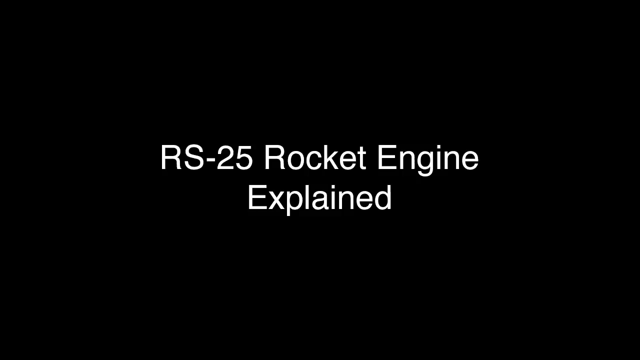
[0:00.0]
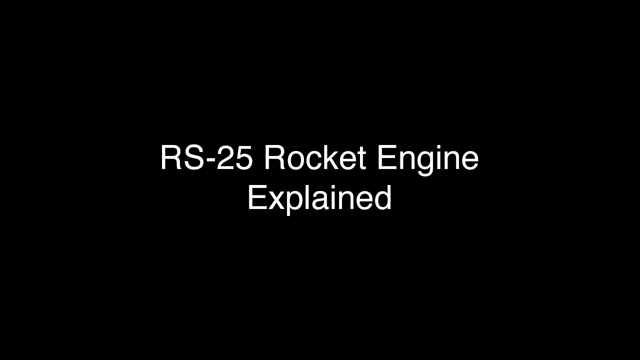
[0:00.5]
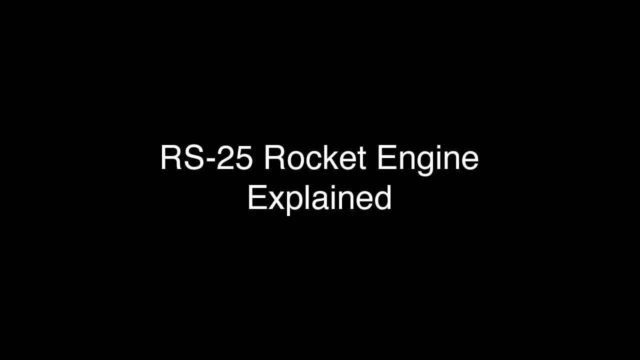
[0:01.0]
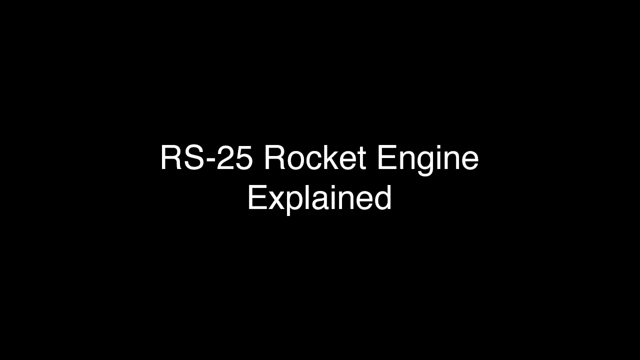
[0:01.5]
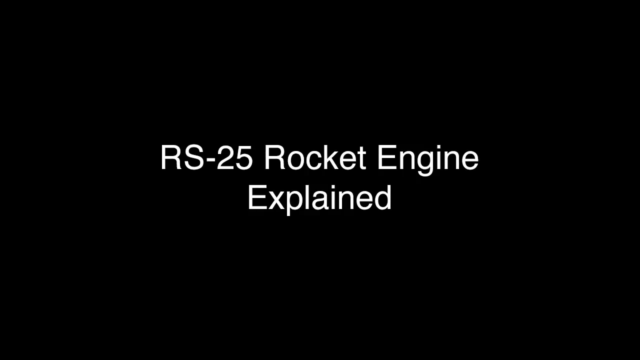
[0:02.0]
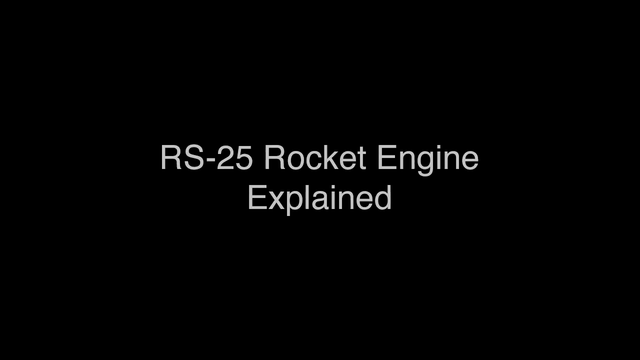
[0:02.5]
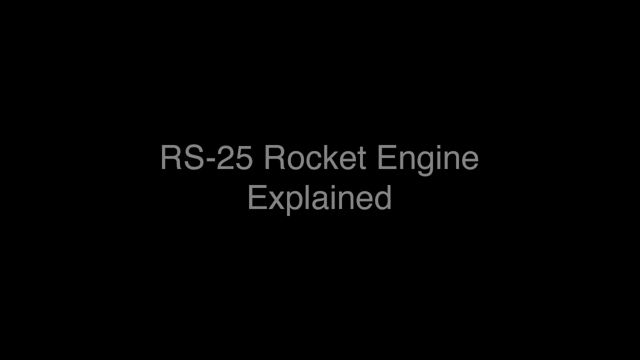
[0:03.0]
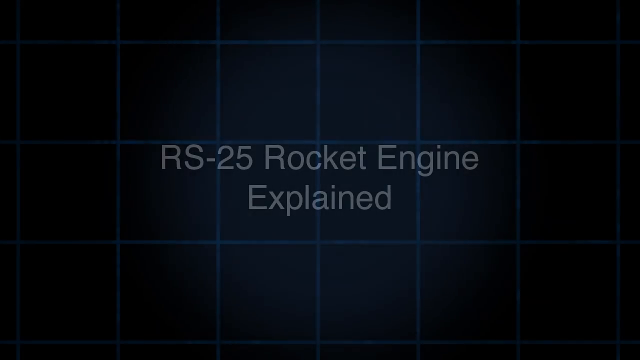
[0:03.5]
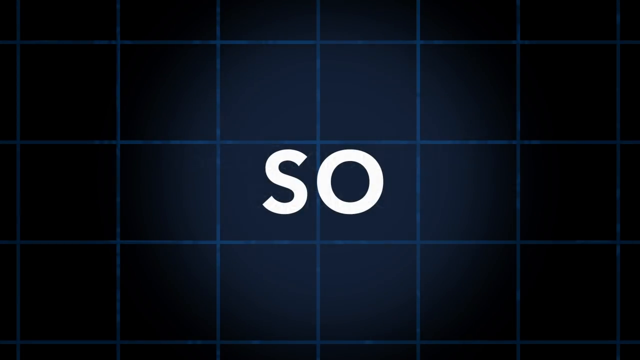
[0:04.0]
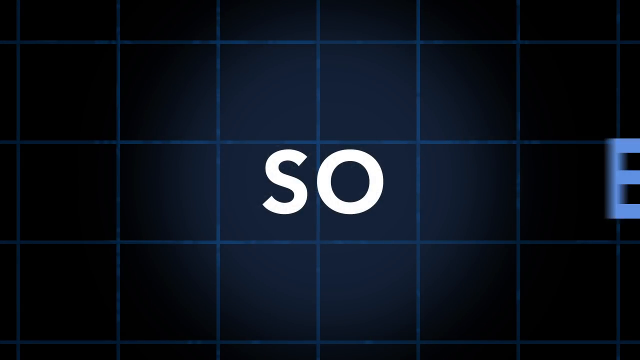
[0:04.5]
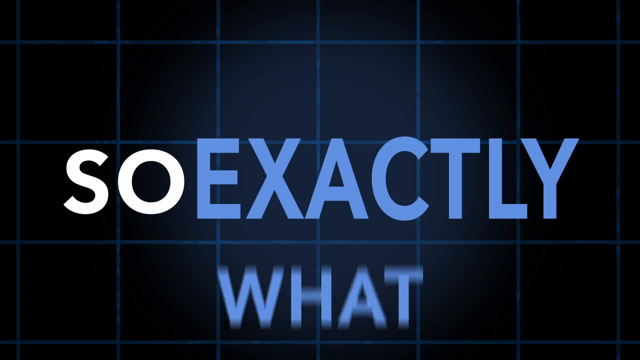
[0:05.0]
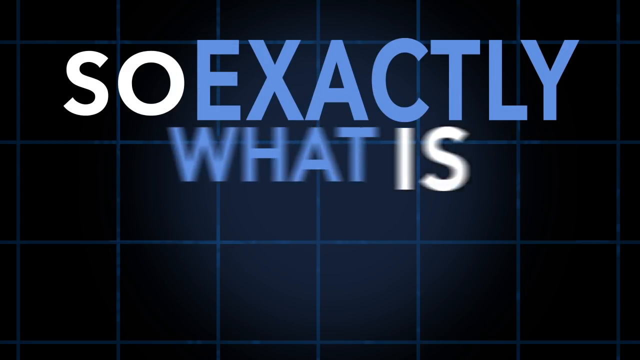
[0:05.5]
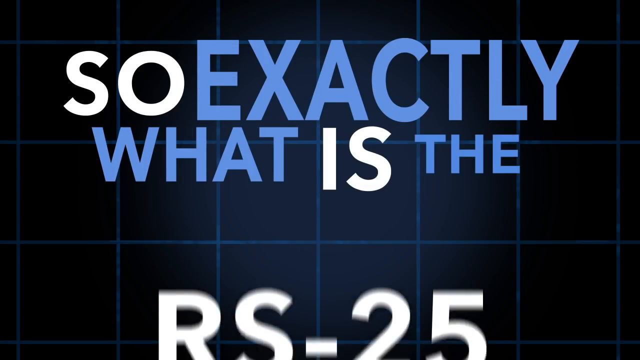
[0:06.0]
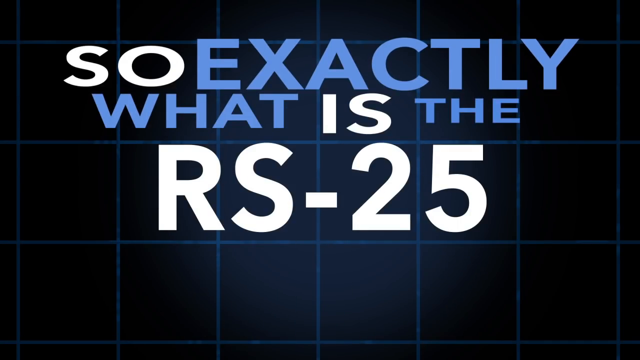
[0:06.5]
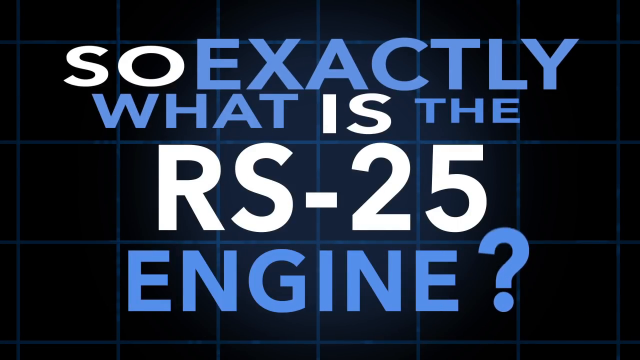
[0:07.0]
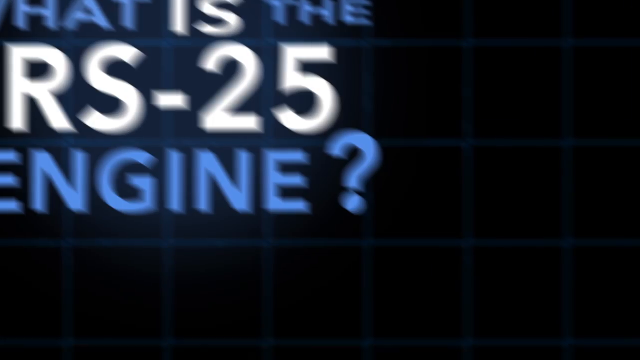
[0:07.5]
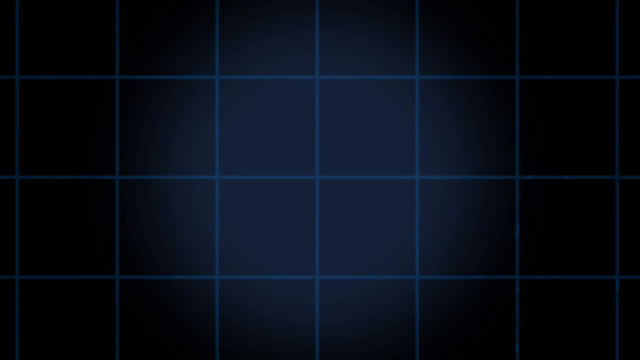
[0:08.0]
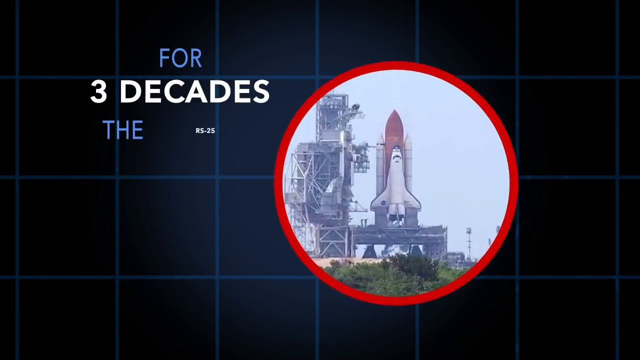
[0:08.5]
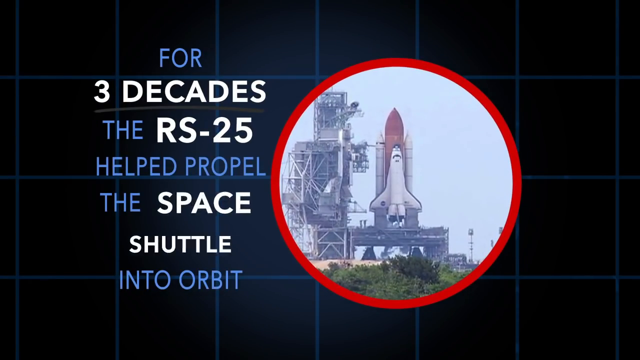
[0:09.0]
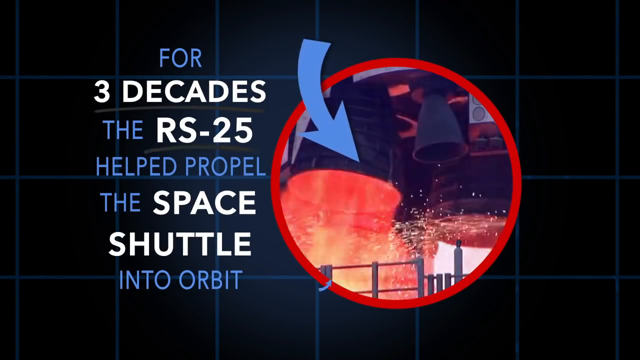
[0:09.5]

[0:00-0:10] The video opens on a black background with white text reading "RS-25 rocket engine explained." Next, white and blue text asks "so exactly what is the RS-25 engine" over a black and dark blue background with a grid of vertical and horizontal blue lines. The view switches to blue and white text on the left reading "for three decades the RS-25 helped propel the space shuttle into orbit." To the right of the text is a red circle with three arrows pointing in. Three rocket engines fire up, and then the space shuttle lifts off from the ground.